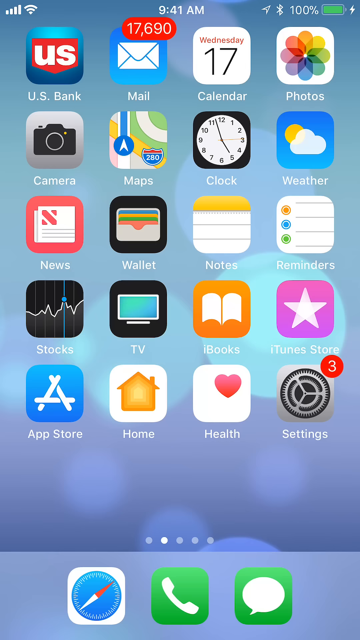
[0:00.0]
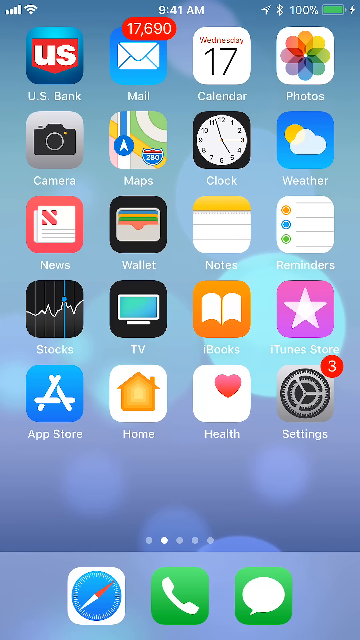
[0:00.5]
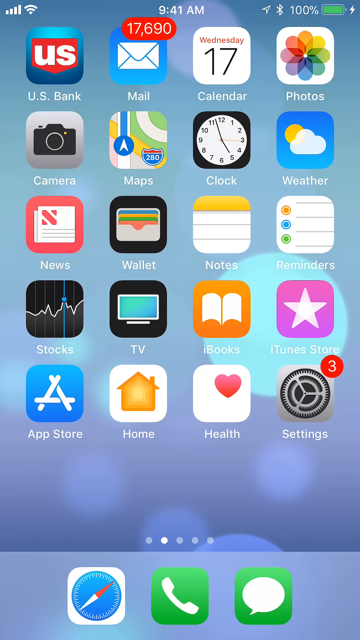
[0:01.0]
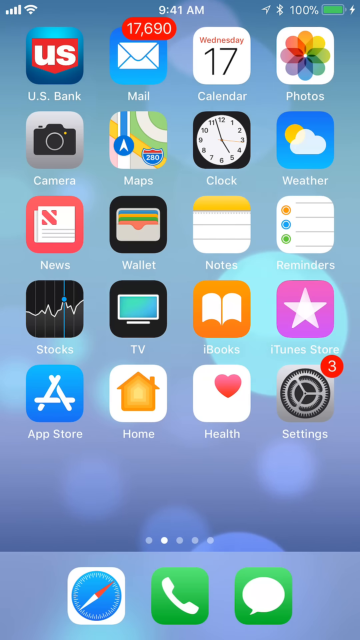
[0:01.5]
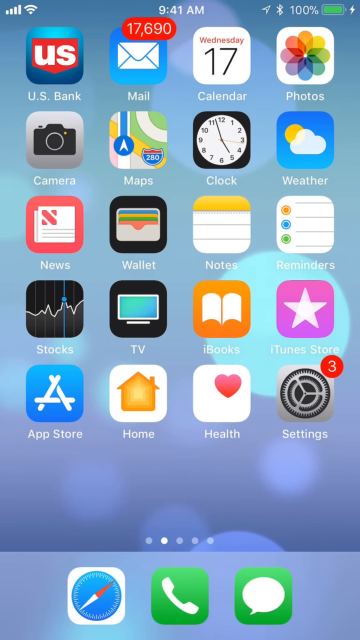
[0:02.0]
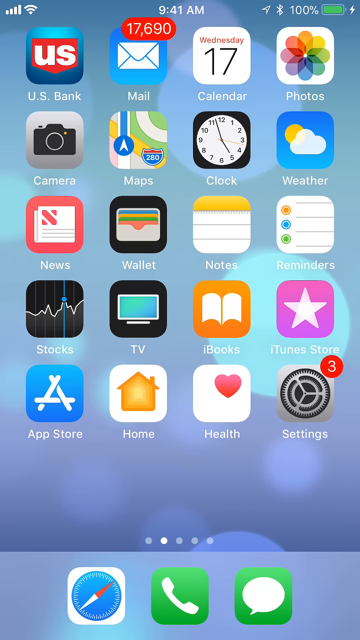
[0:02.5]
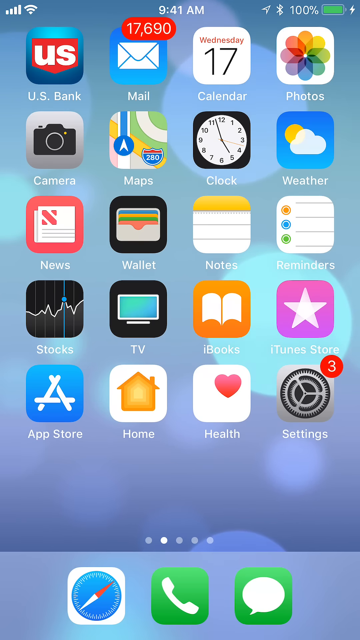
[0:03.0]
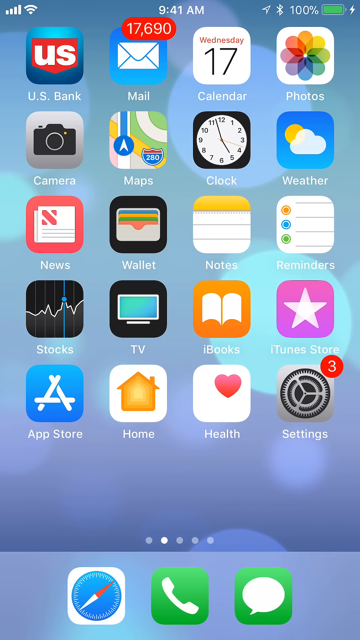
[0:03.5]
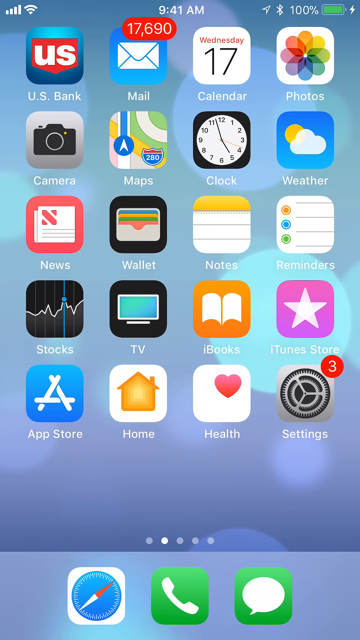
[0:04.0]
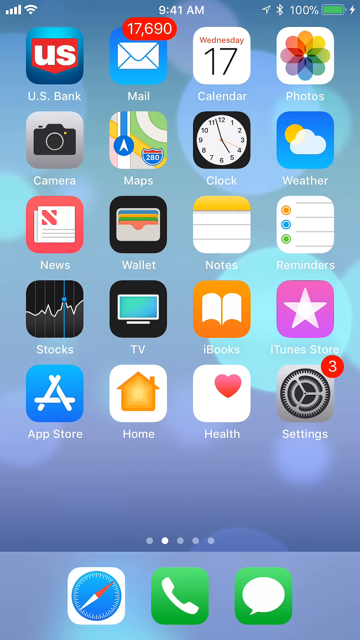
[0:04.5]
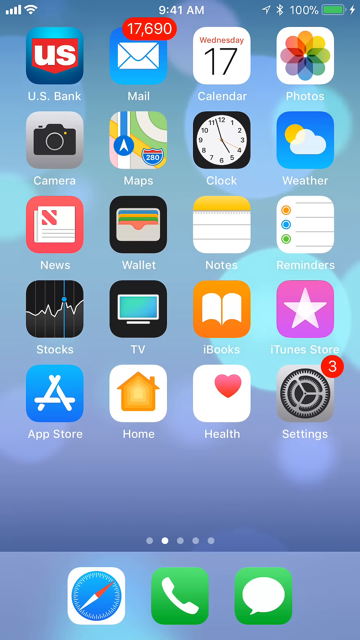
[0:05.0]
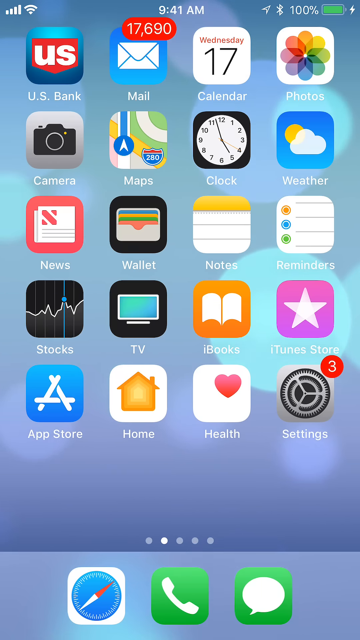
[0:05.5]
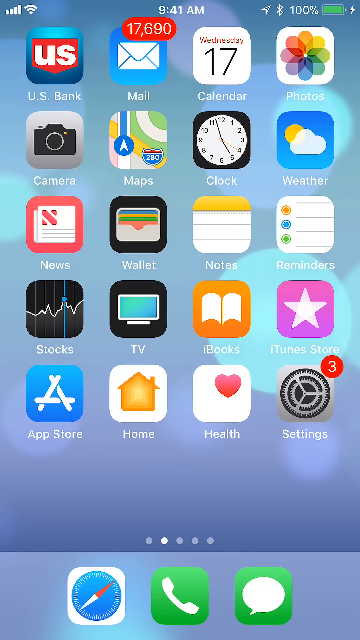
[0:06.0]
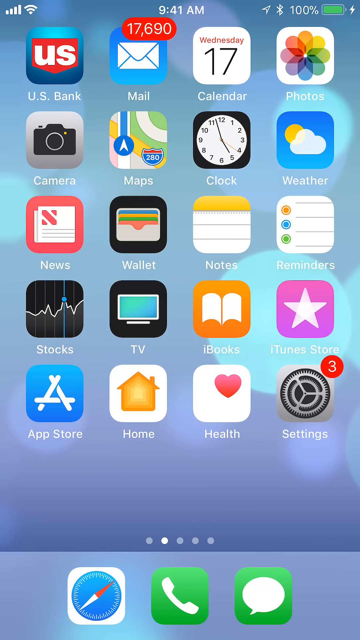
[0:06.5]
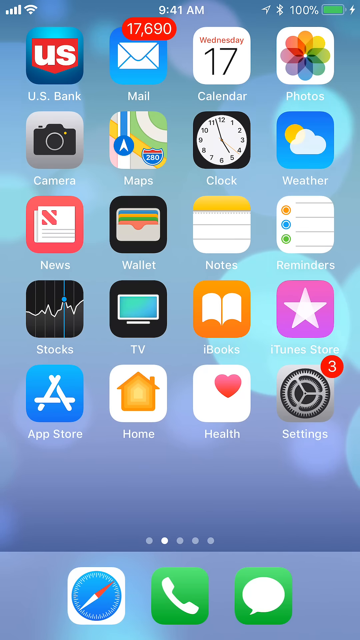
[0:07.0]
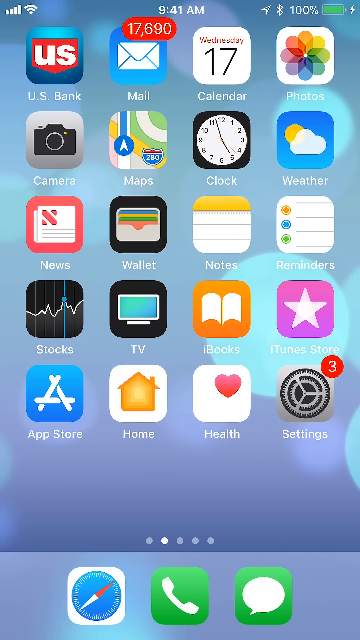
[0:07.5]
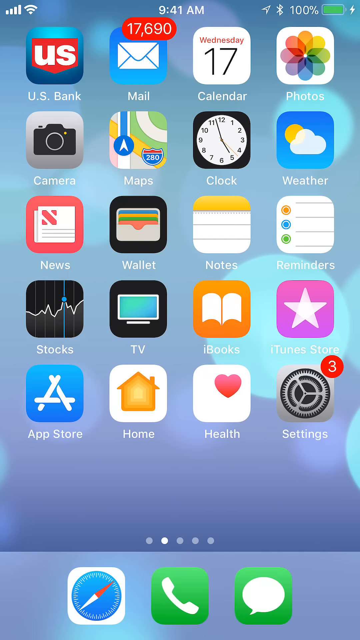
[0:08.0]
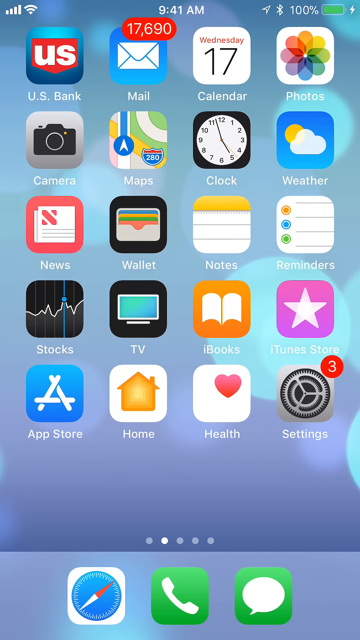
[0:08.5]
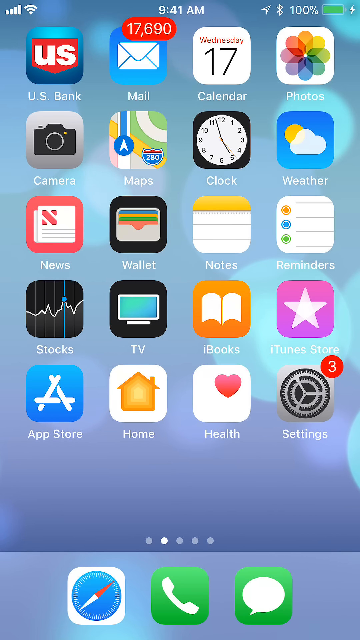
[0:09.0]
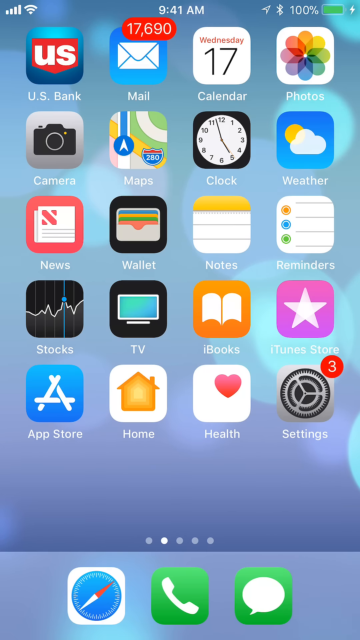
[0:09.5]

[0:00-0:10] What appears to be a cell phone screen shows a whole bunch of icons. In the top right corner, the battery is 100% charged, with a green battery indicator and a small lightning charge symbol on the side. In the middle of the top of the screen, the time reads 9:41 AM. There is a red pill with the number "17690". Underneath are five rows of icons, with four icons in each row.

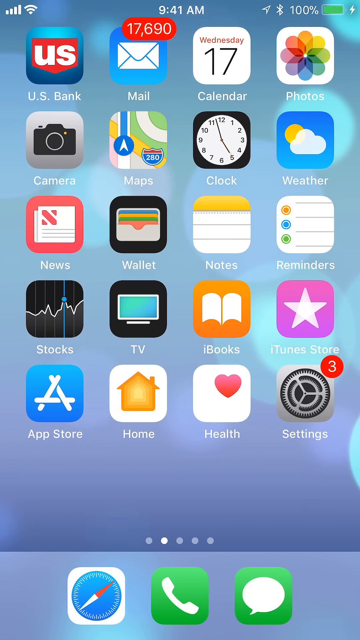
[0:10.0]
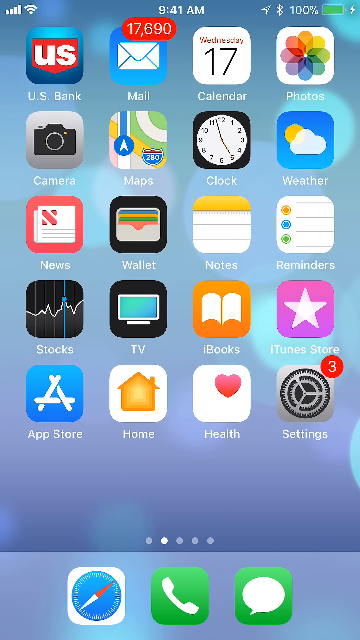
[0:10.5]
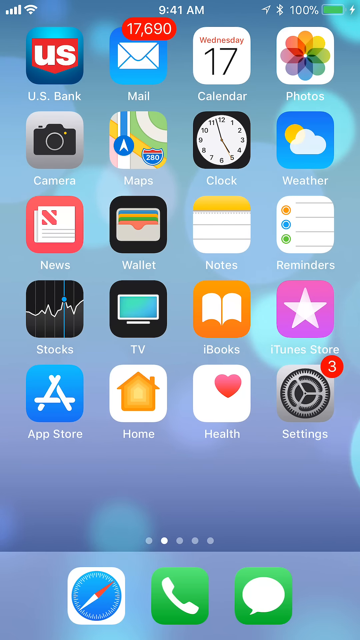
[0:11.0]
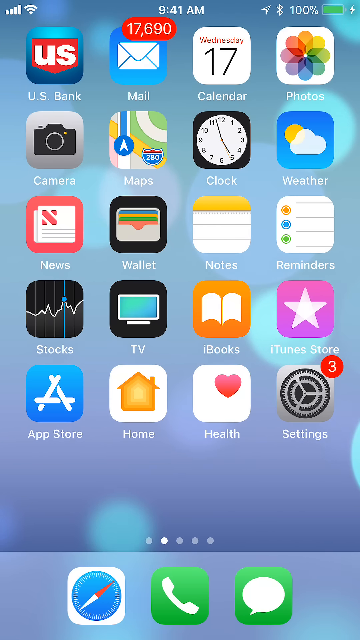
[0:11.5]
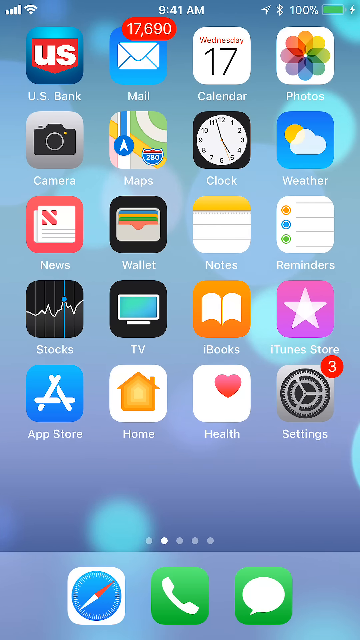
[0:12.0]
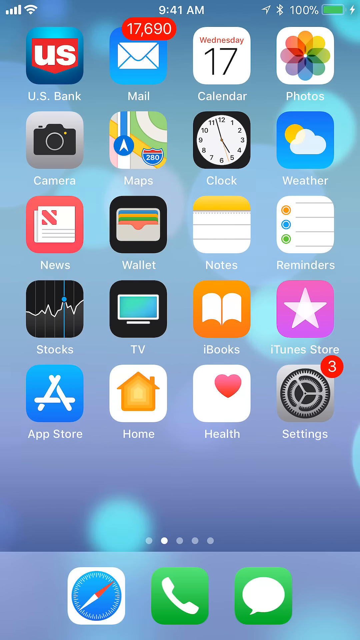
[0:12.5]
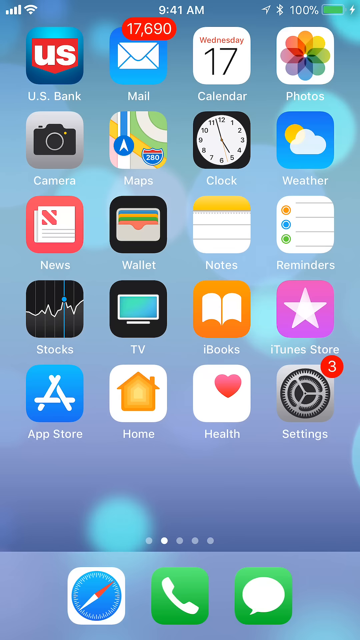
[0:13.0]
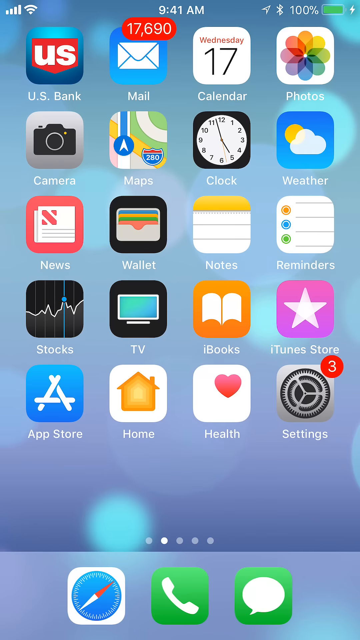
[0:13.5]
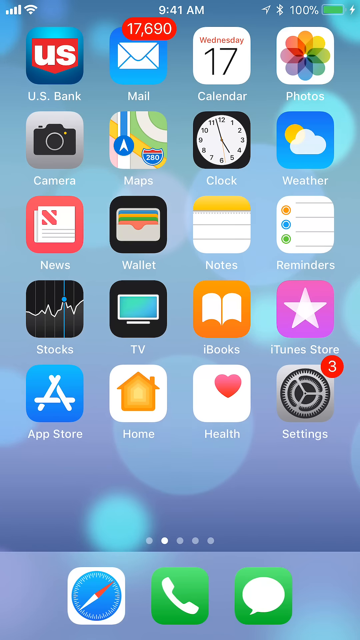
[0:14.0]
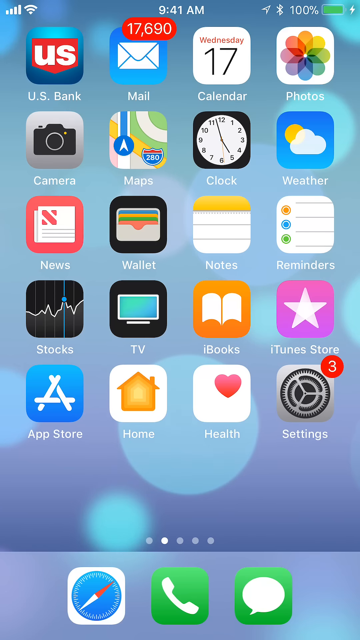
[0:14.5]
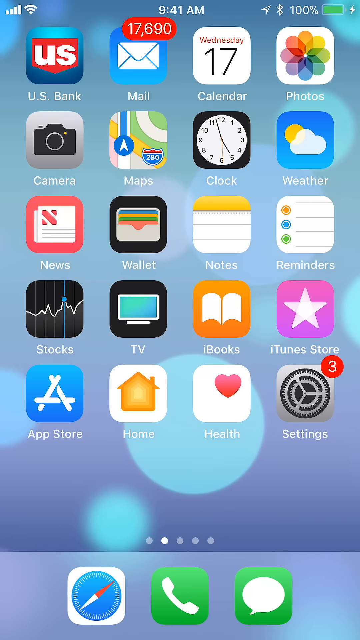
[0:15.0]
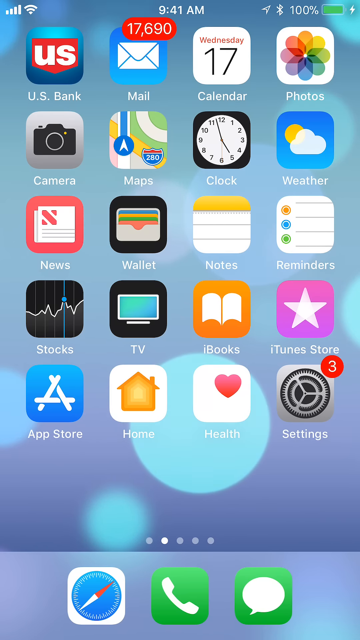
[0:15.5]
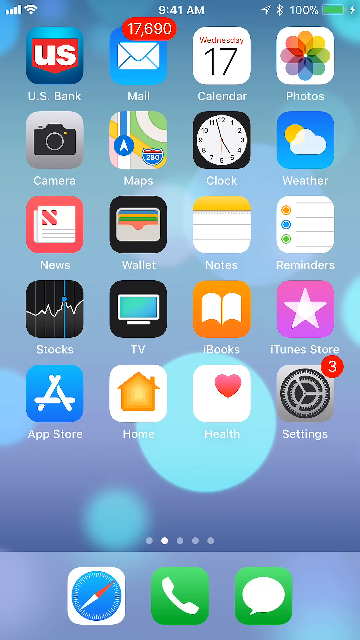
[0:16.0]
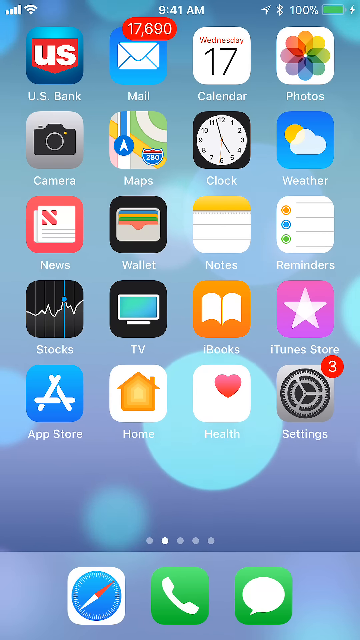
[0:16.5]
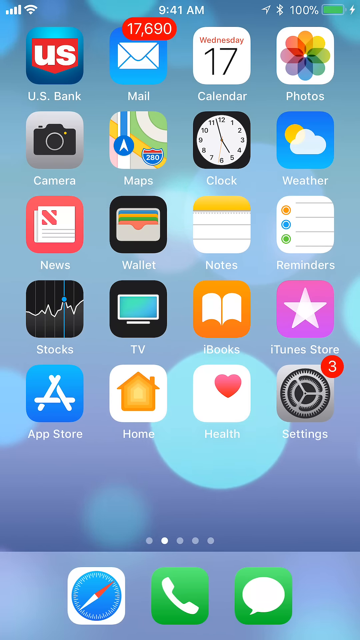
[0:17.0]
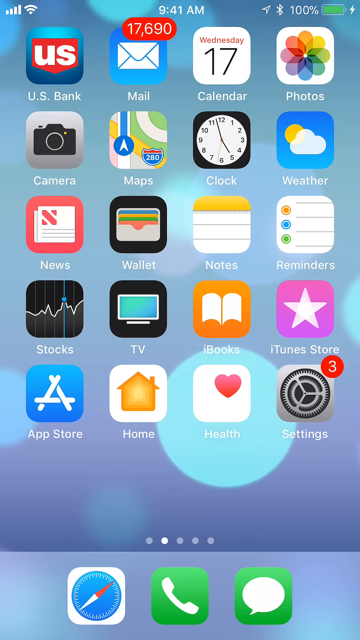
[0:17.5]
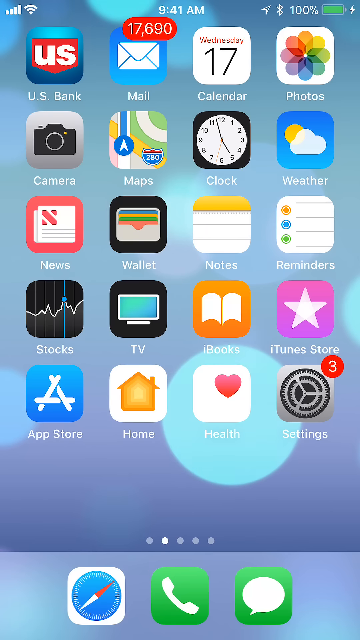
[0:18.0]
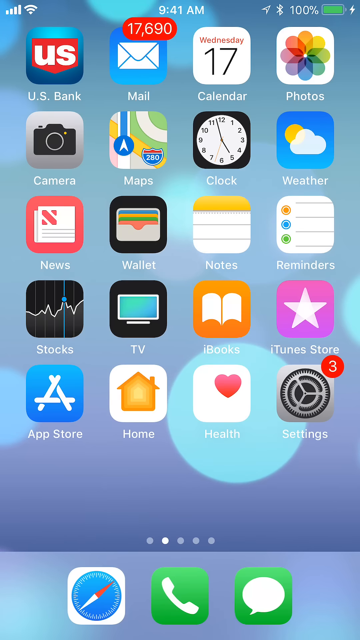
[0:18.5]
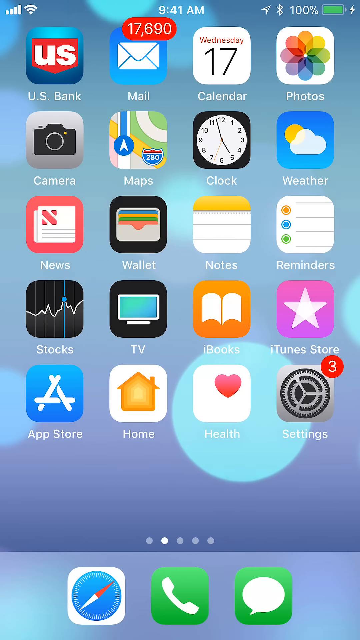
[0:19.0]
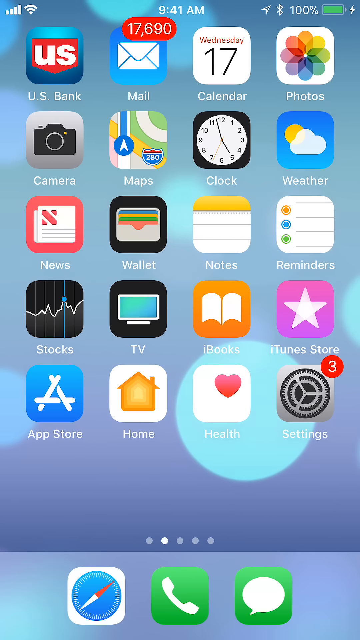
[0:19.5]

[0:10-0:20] What looks like an iPhone screen shows a whole bunch of icons. Near the top there is a red pill containing the text "17,690"; there seem to be messages that have not been read yet. The pill appears to be in front of the mail icon, which has a white envelope on it. There are about 20 icons with a uniform structure, arranged in rows and columns.